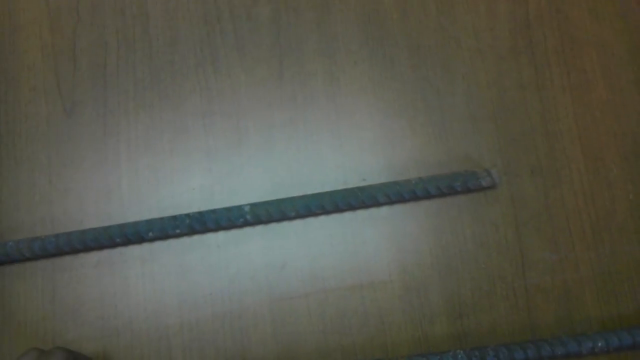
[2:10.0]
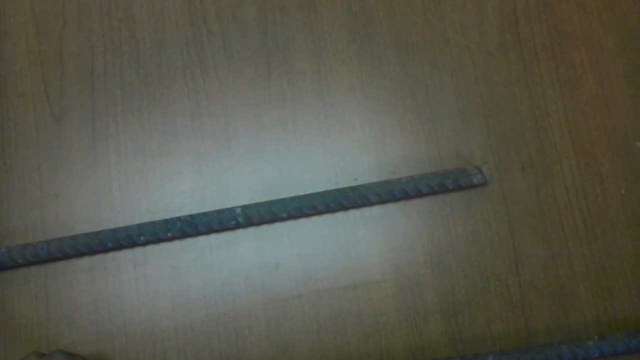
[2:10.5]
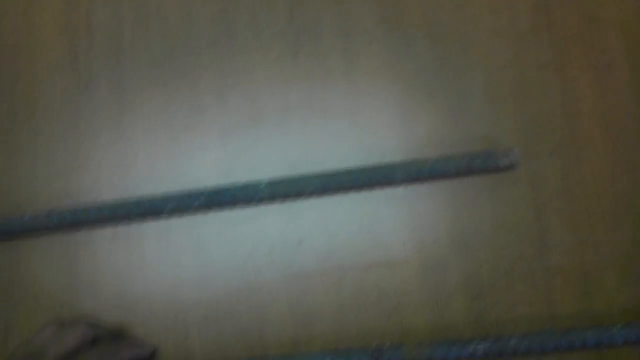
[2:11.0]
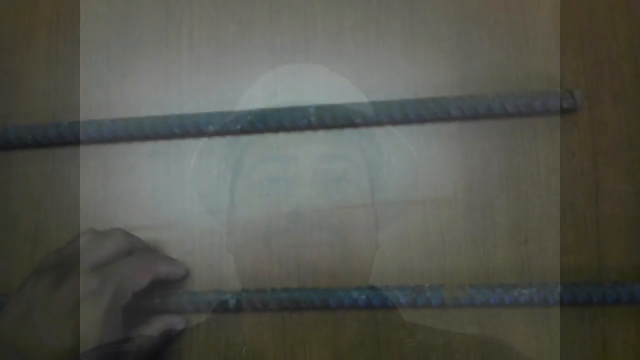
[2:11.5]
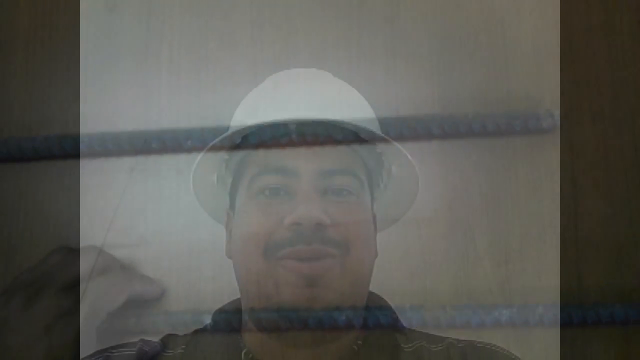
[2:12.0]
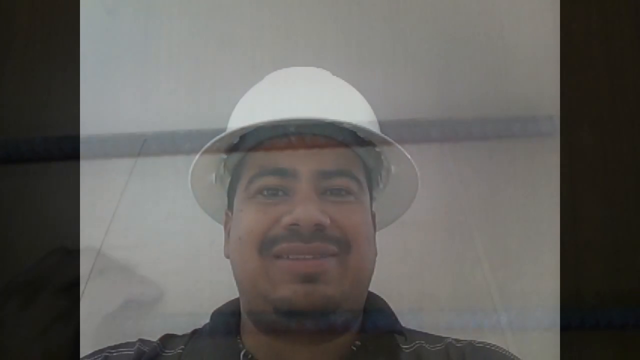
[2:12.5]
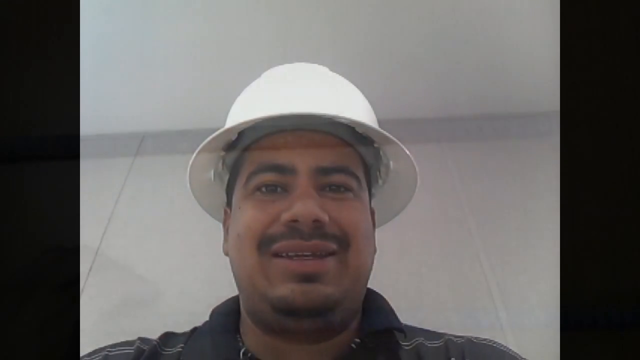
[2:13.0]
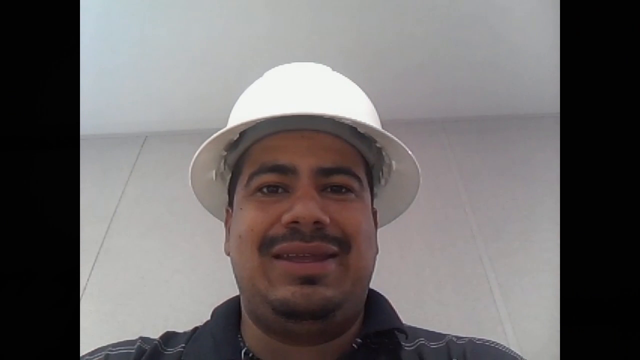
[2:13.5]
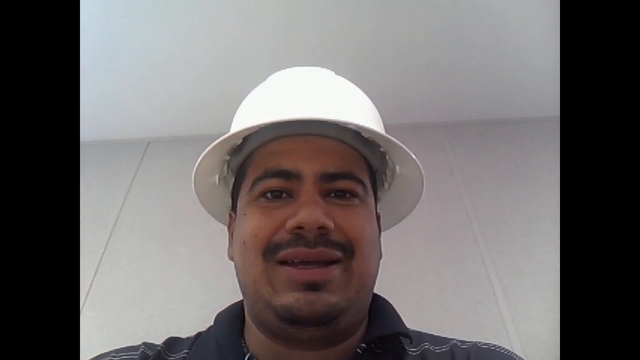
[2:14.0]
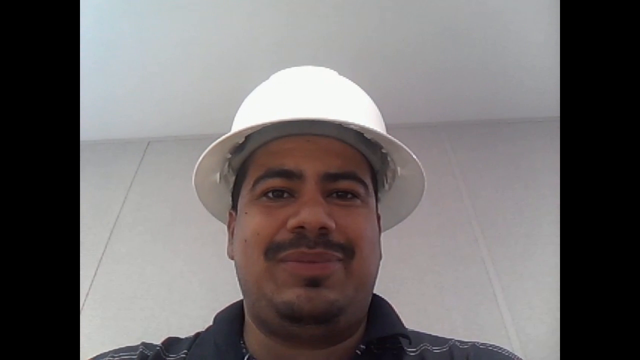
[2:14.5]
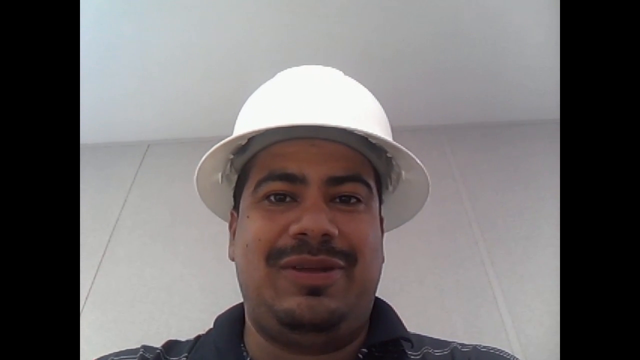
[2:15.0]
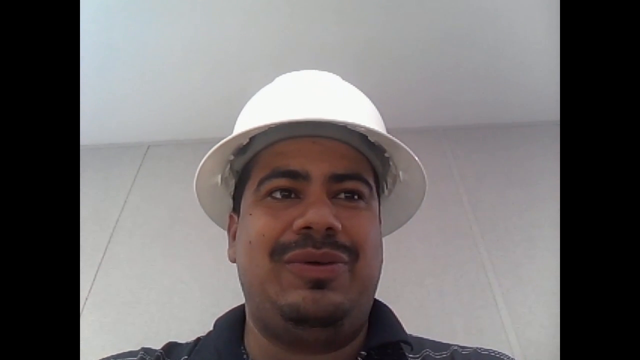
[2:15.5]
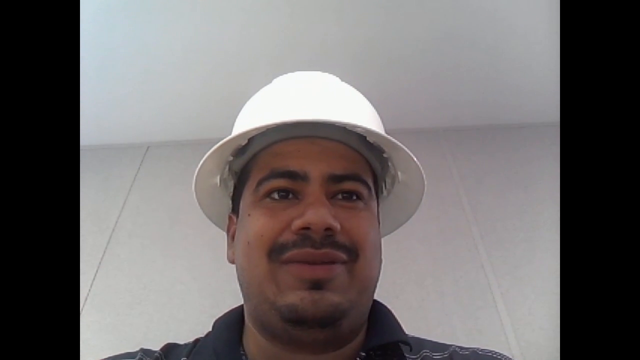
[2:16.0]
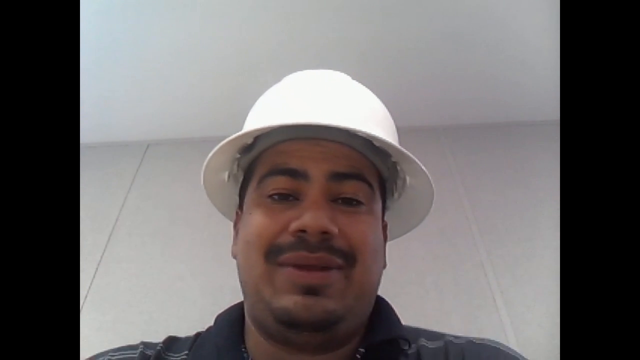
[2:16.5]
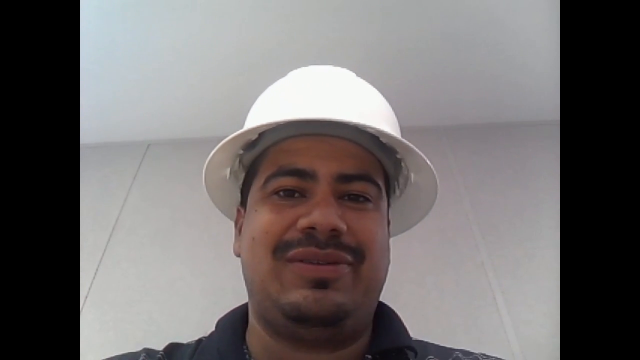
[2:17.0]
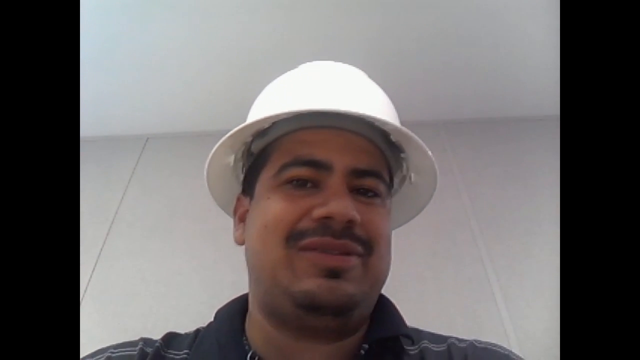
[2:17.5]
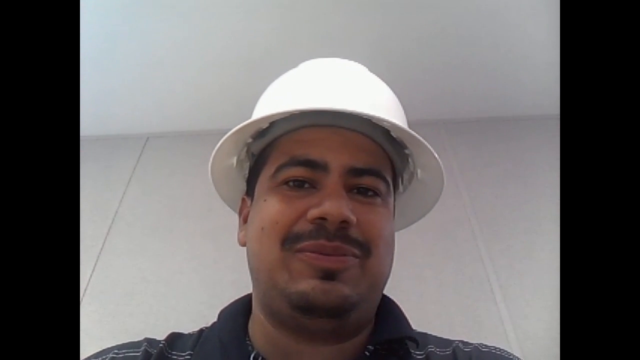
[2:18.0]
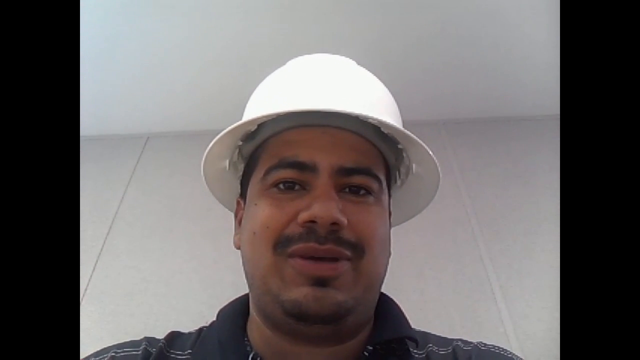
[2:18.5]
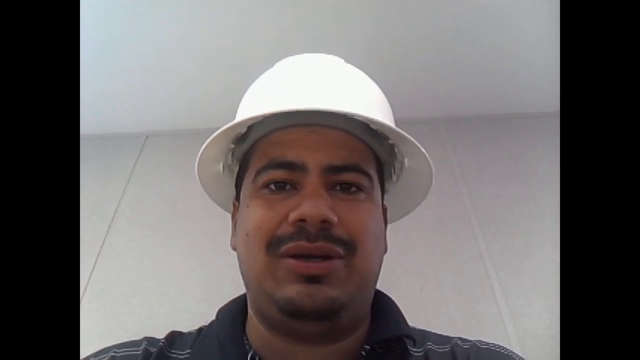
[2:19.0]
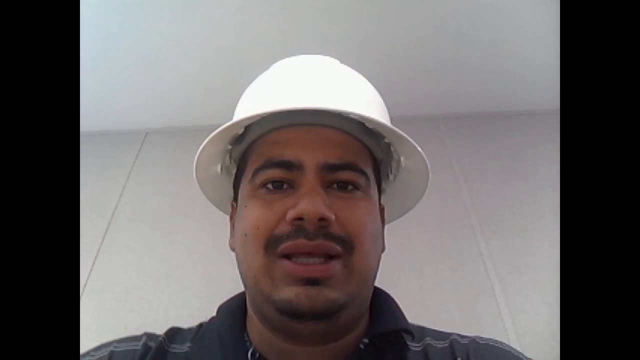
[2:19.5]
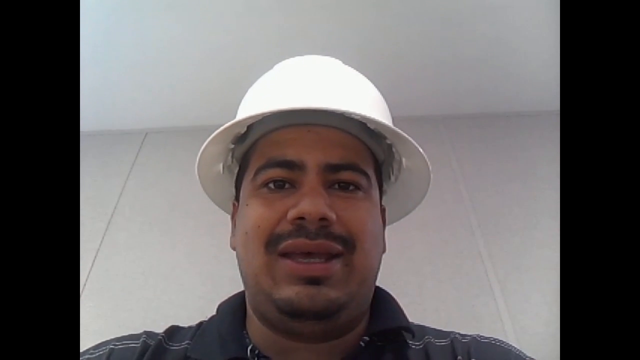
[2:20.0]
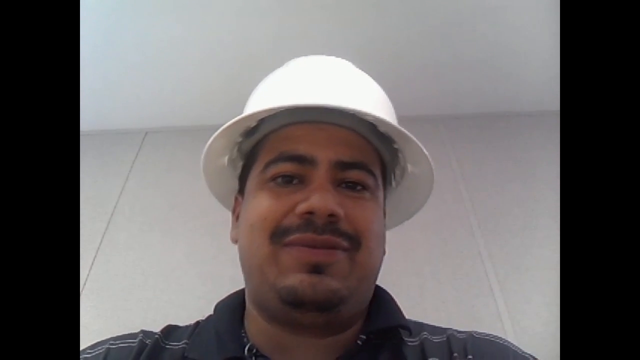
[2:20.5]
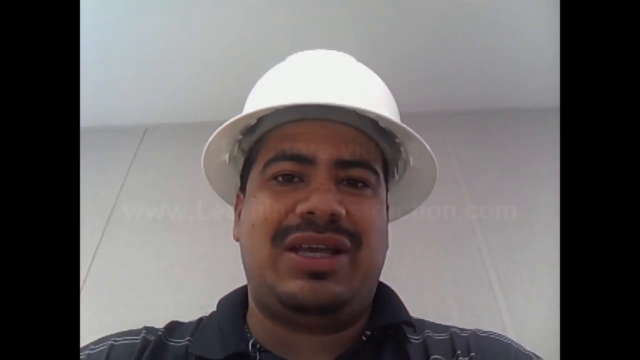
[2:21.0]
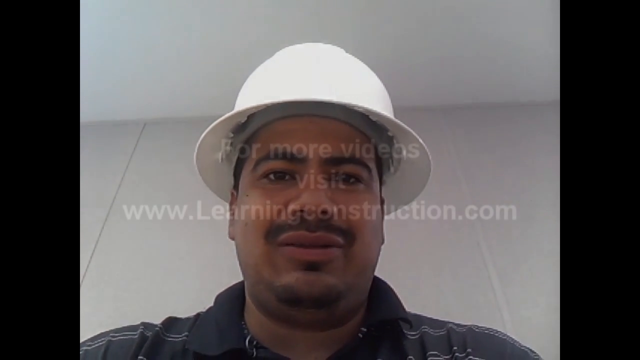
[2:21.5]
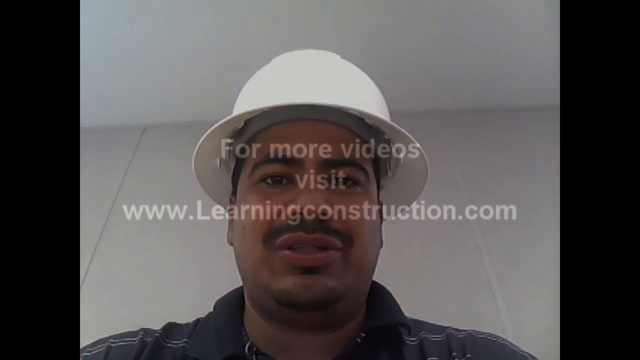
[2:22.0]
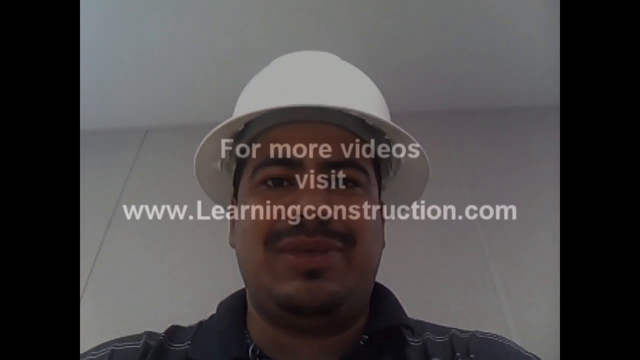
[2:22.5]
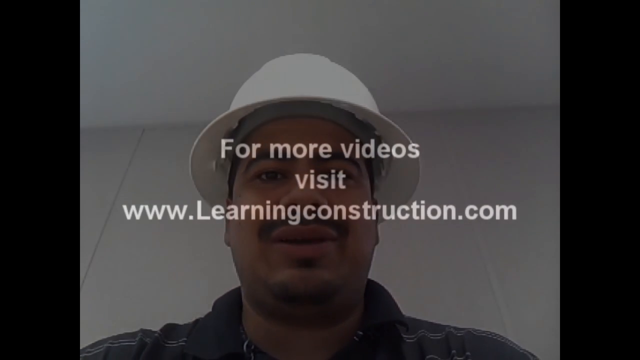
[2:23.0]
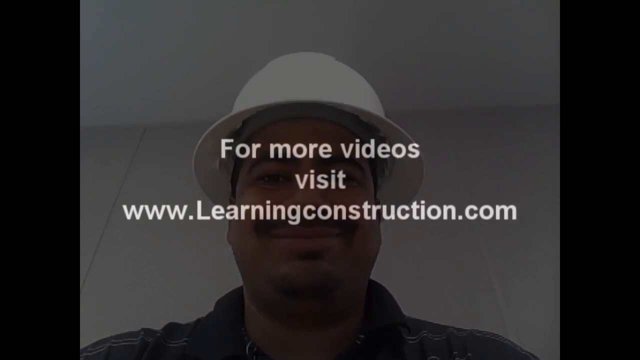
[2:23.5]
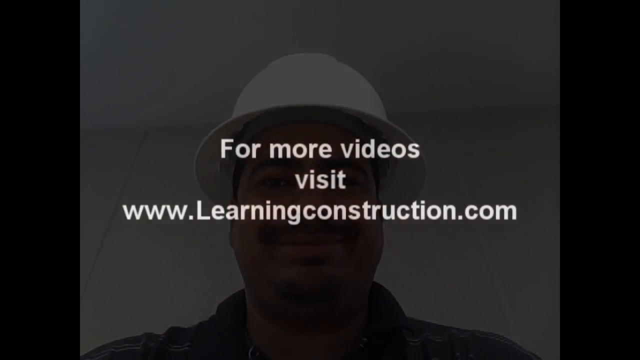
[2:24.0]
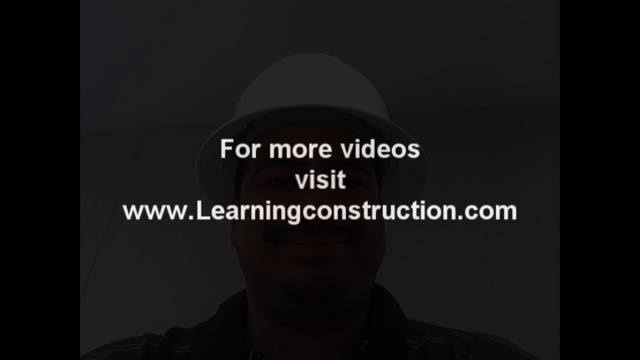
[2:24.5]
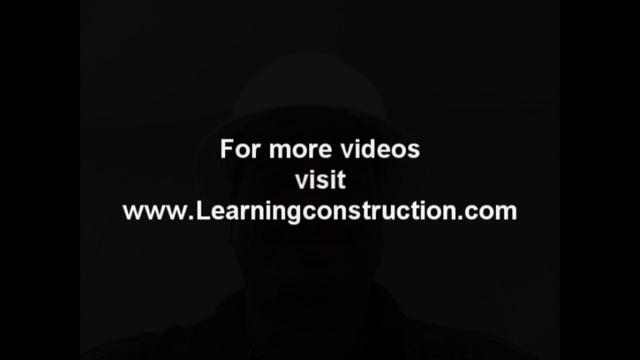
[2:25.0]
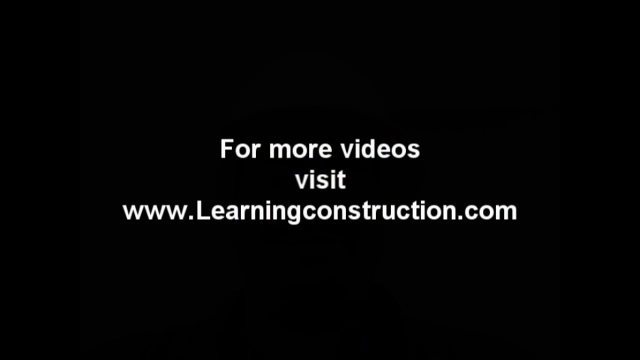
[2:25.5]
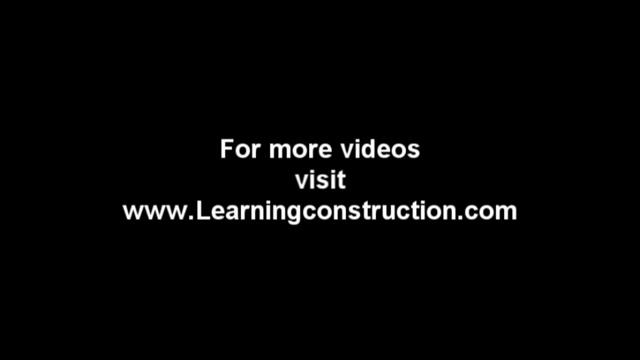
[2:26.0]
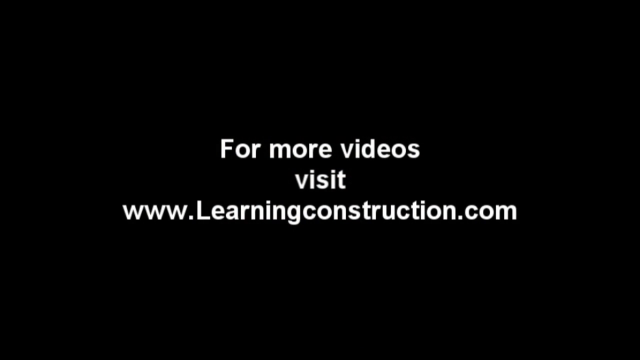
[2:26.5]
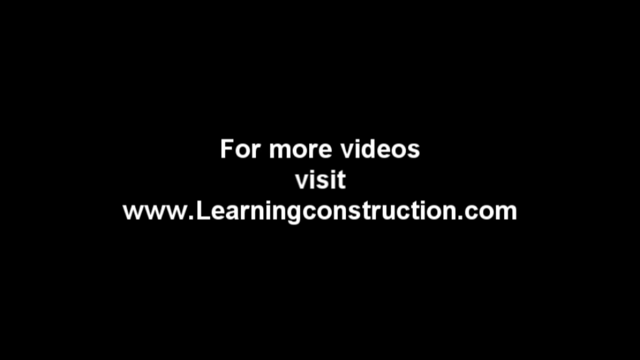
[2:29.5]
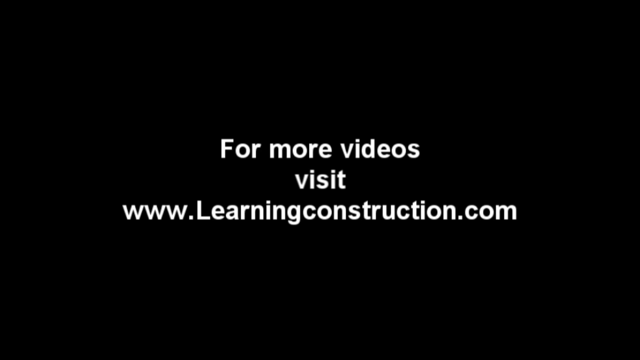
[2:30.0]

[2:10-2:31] Two pieces of rebar are on a wooden table, one coming from the left-hand side and one from the right-hand side, with sort of a white glare on the table from an overhead lamp. The view appears to be from a cell phone camera, and it shakes a little. A hand coming in from off the left-hand side of the image holds on to one of the rebar rods. The image then dissolves to the face of a man, presumably holding the camera or cell phone in his hand slightly below his face and pointing it up. He wears a white hard hat and a dark-colored shirt, and has a mustache and sort of a little soul patch under his chin. He is in a white room with white walls and a white ceiling, with a couple of division lines visible in the wall behind him. He talks pleasantly to the camera with a slight smile, directly addressing the viewer.